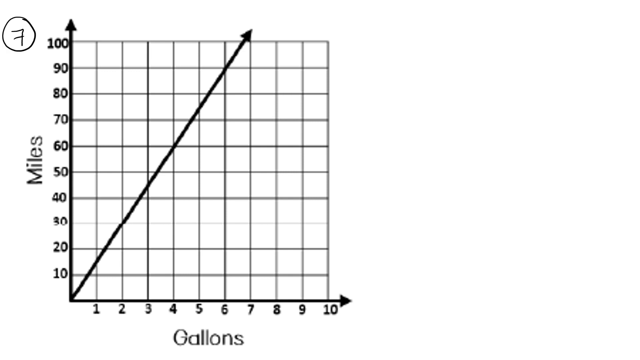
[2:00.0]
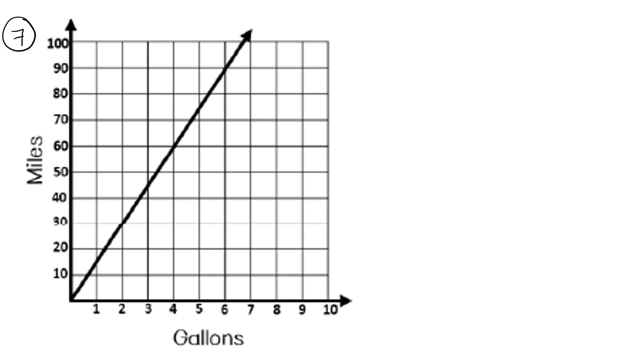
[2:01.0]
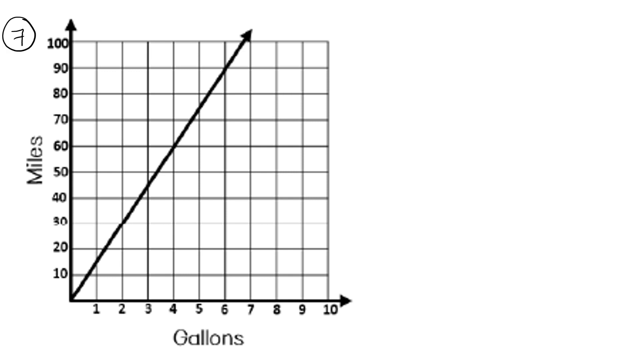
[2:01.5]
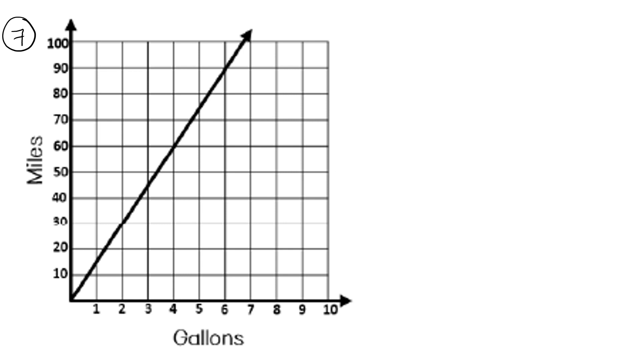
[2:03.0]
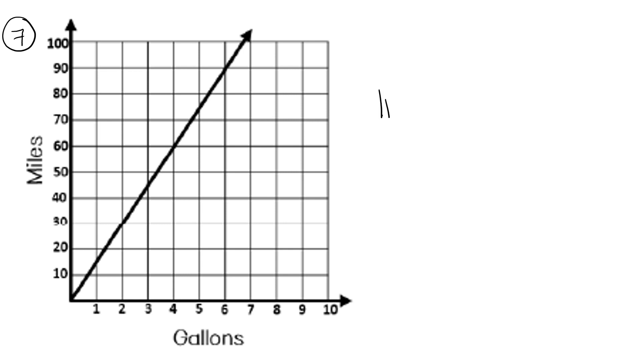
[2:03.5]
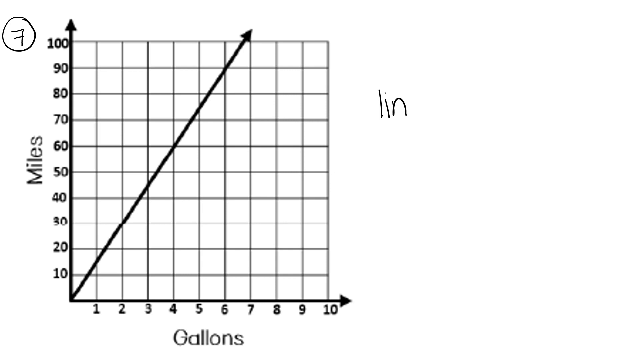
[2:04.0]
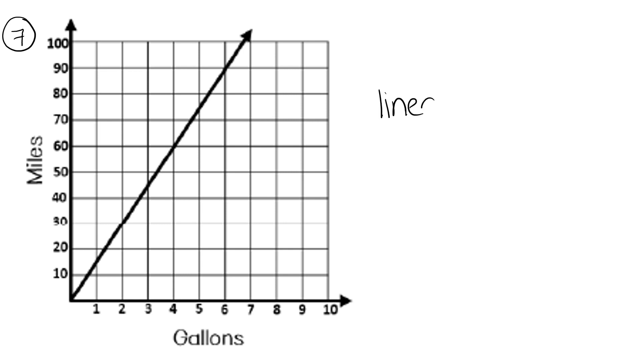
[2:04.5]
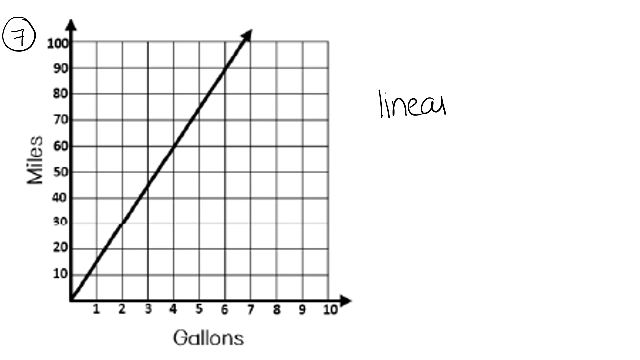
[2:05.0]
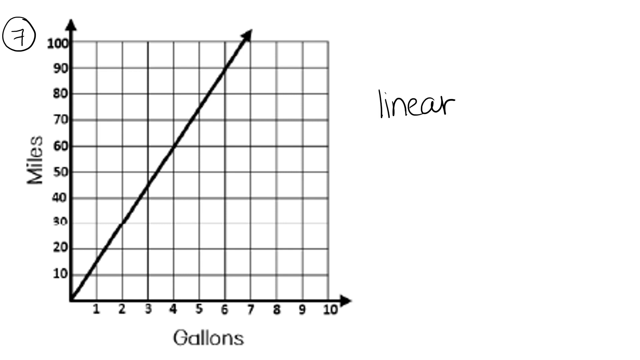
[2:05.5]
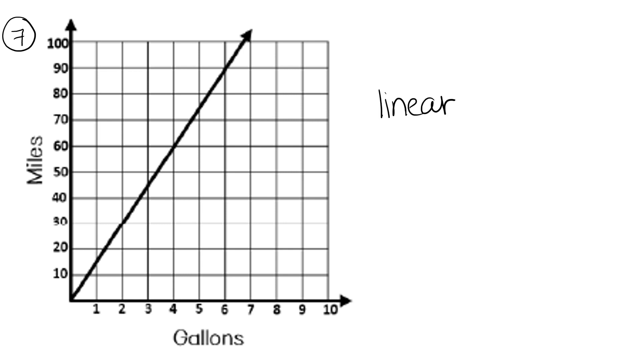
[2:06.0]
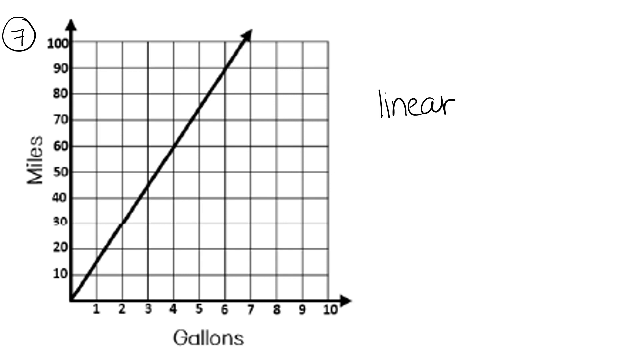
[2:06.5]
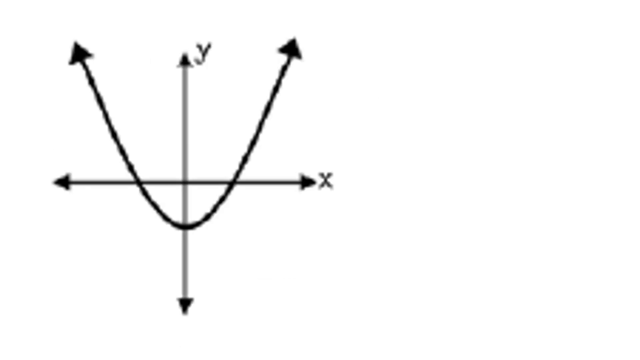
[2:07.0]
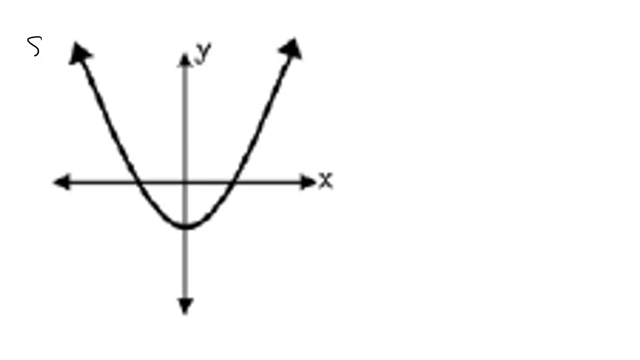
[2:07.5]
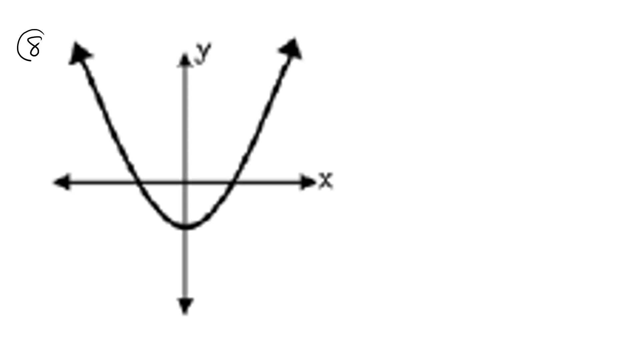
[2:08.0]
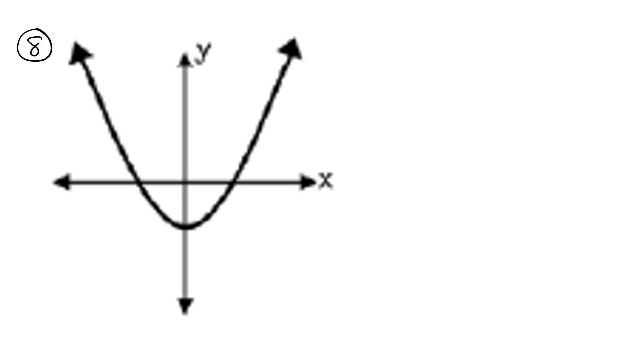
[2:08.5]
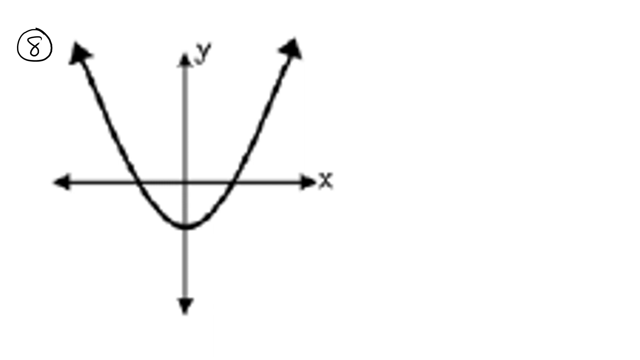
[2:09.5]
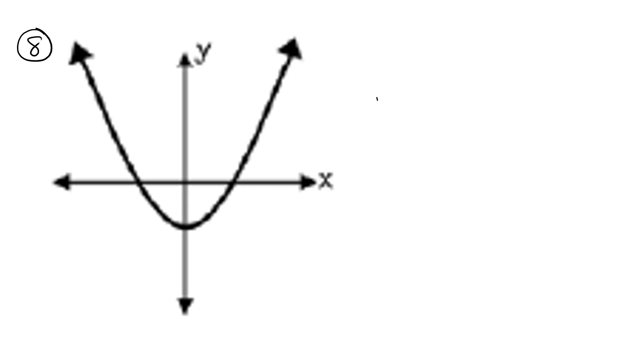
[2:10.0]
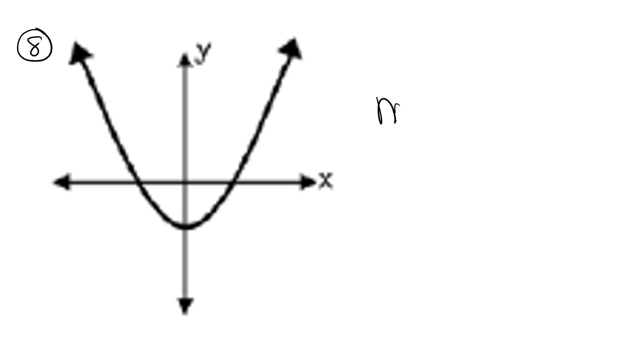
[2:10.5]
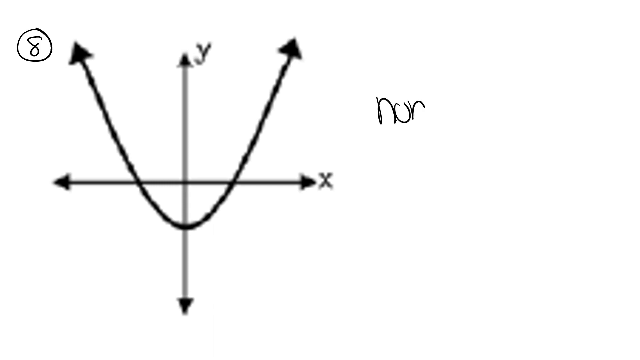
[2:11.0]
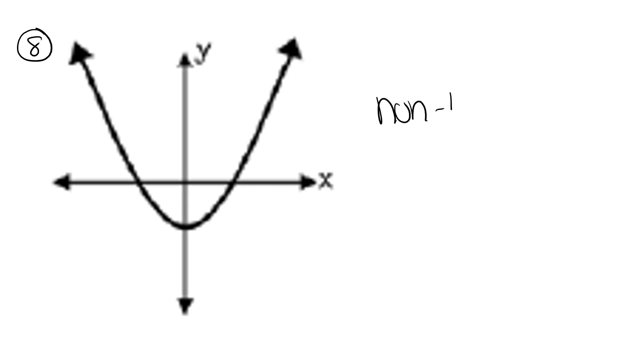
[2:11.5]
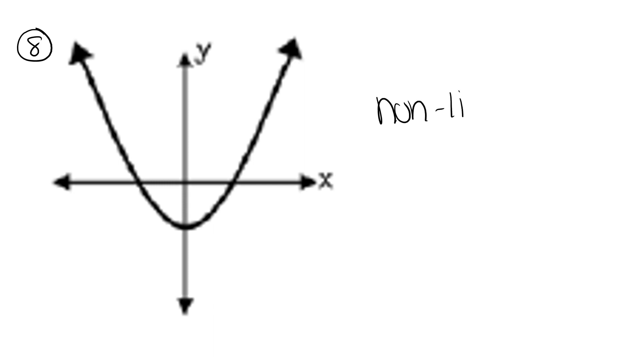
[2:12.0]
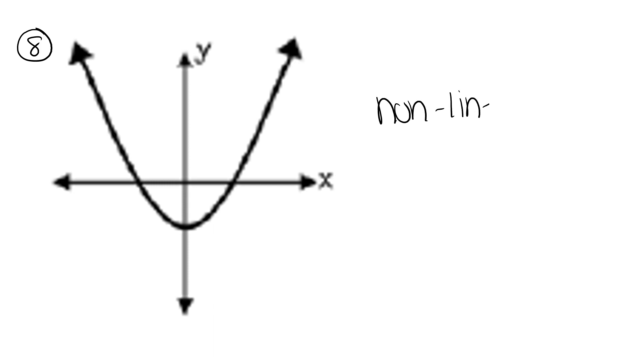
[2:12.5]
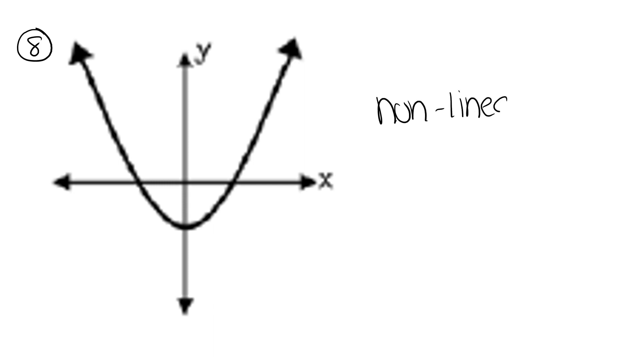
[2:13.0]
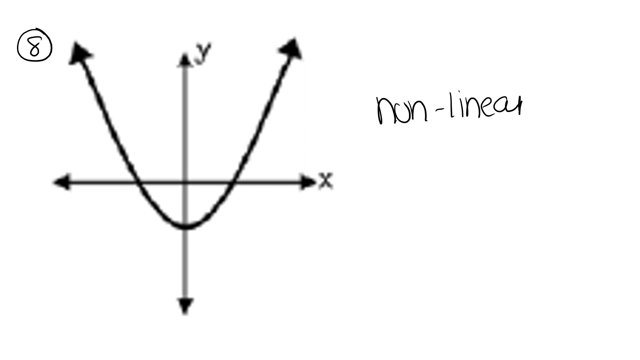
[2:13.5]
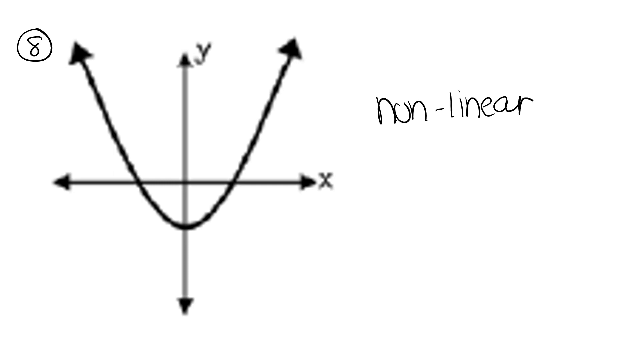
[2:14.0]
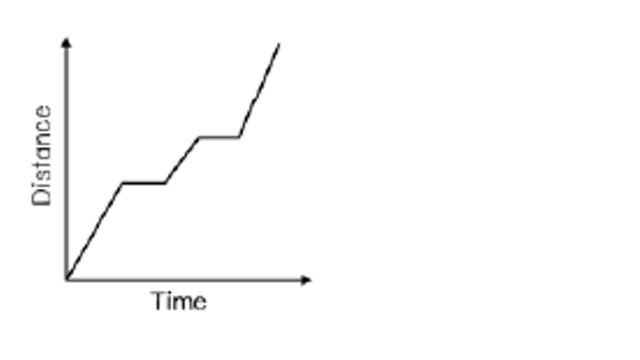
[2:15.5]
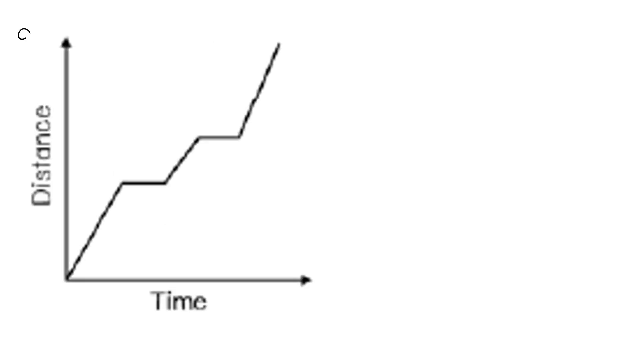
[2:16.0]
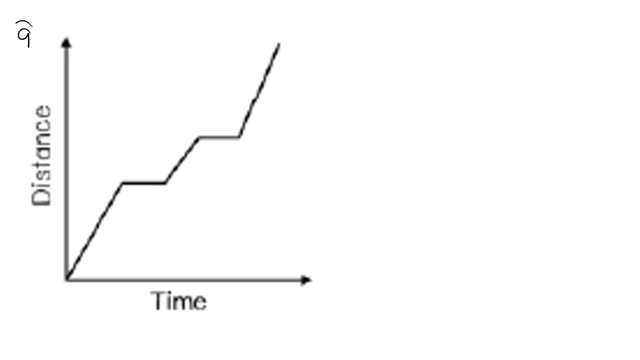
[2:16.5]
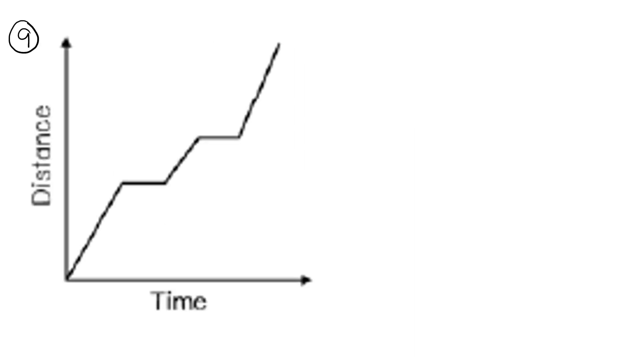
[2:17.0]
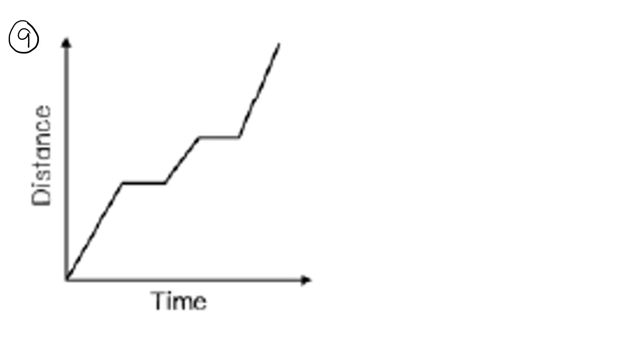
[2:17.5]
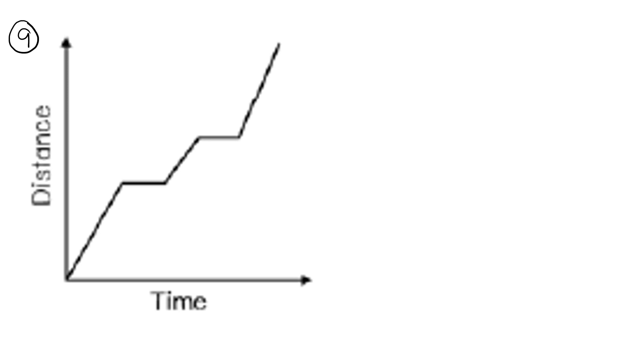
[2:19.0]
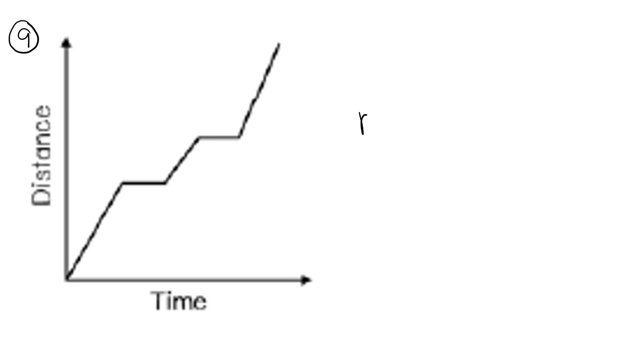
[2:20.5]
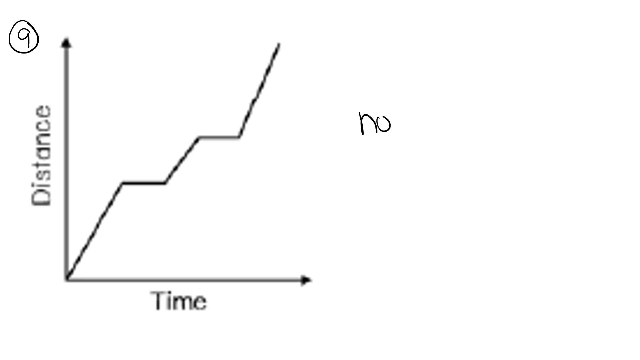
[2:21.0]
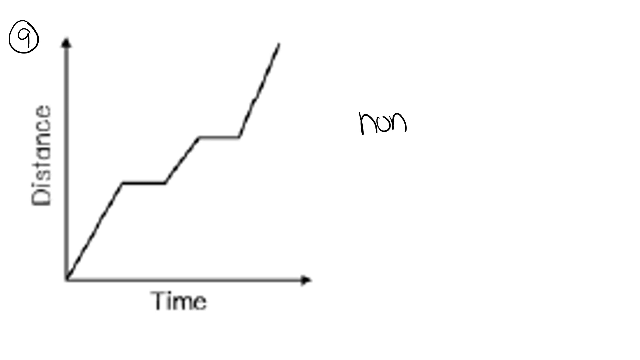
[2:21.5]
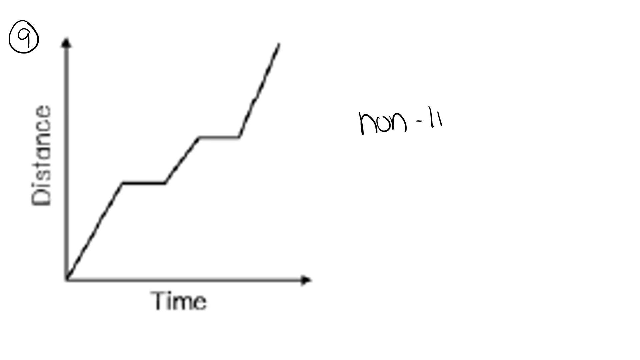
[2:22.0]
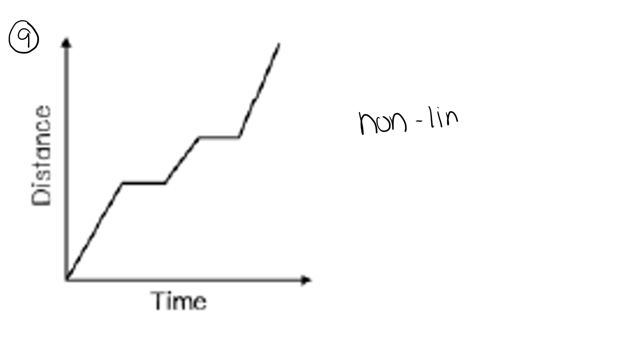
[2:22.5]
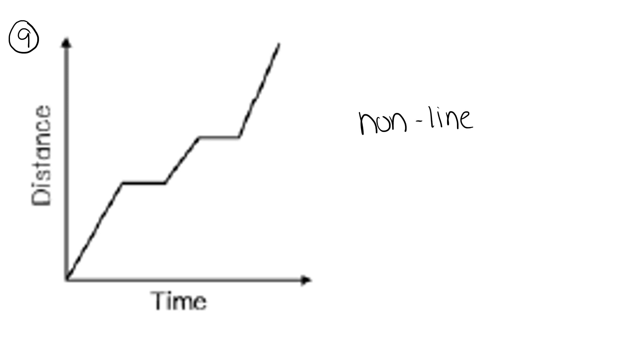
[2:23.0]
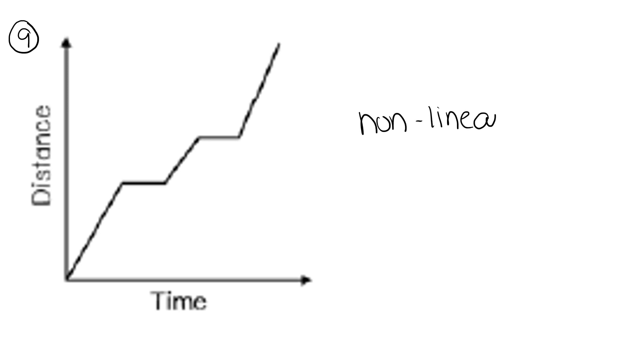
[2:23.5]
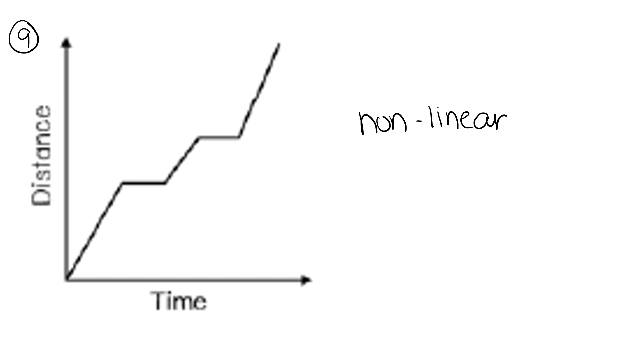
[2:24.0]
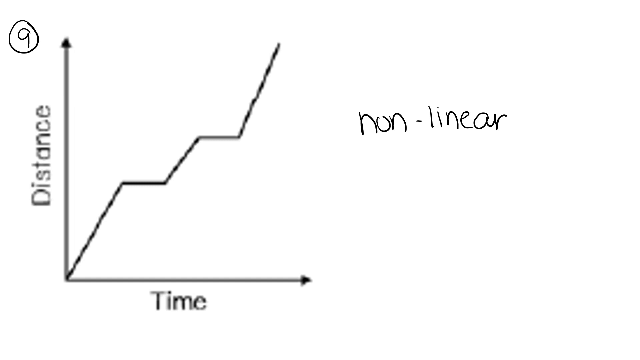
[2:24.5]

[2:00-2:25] Graph number 7 is introduced, with miles on the y-axis and gallons on the x-axis. The miles run from 10 up to 100 in tens, and the gallons from 1 to 10. A straight line is drawn from 0, reaching 105 on the y-axis and touching 7, or 7.1, on the x-axis. The word "linear" is written at the top right. Next, diagram number 8 is drawn on a compass-like graph with y and x axes and no graph paper visible; it is only a U-shape, with the line touching both the negative and positive sides, and "linear" at the top right. Then another graph appears, numbered 9, with distance on the y-axis and time on the x-axis; its lines look like a staircase, and it is a nonlinear graph because it is not a straight line.